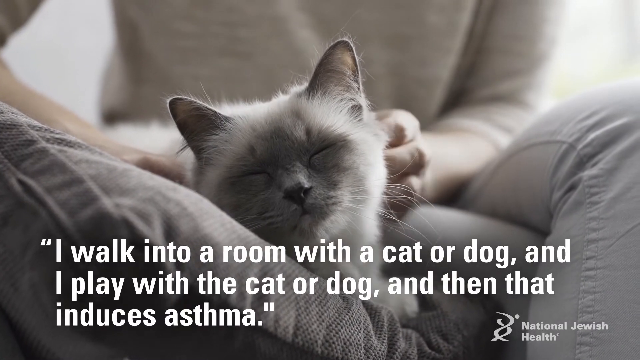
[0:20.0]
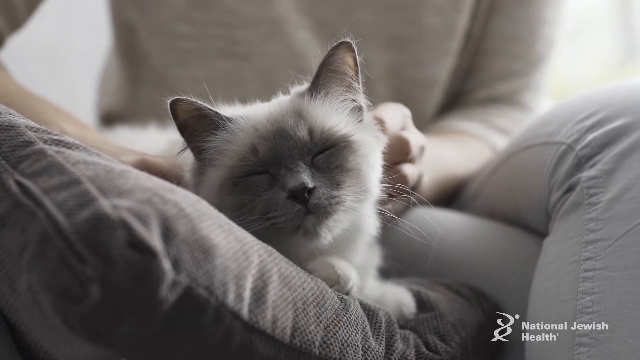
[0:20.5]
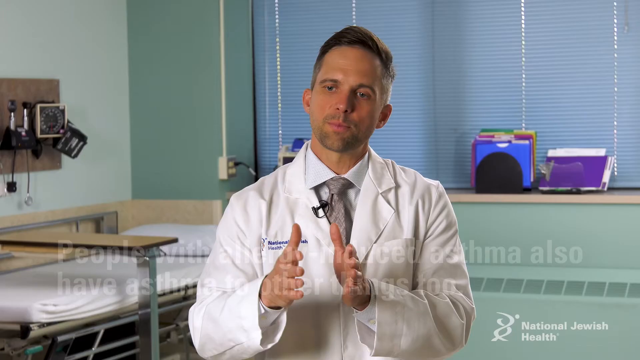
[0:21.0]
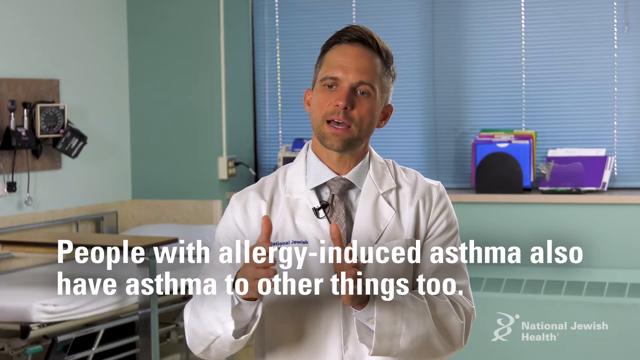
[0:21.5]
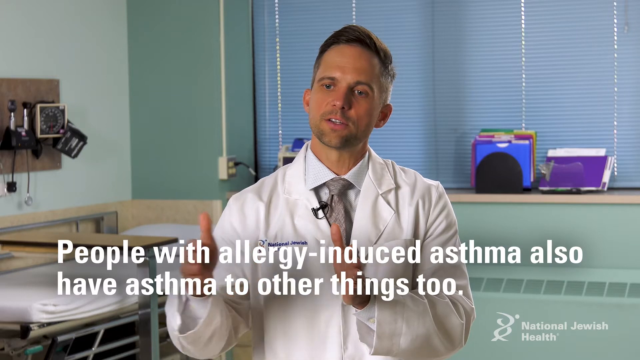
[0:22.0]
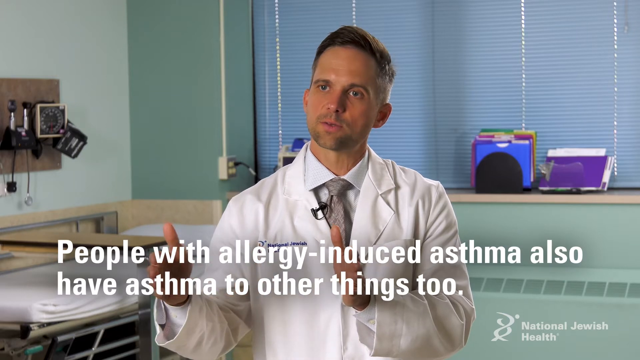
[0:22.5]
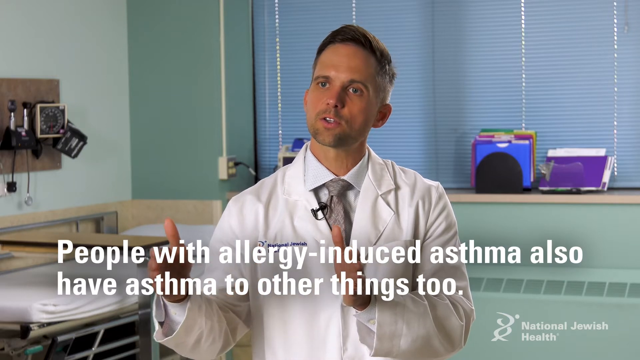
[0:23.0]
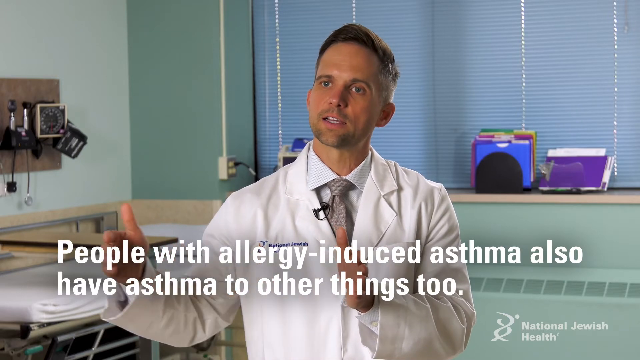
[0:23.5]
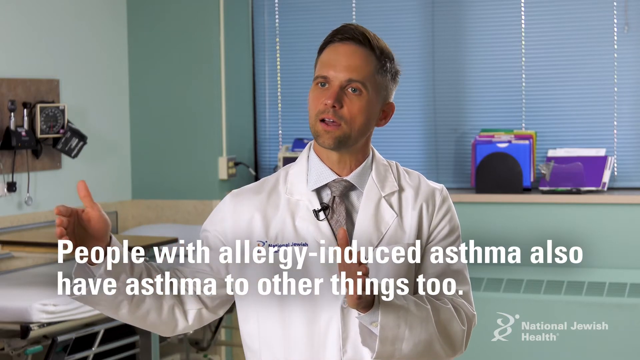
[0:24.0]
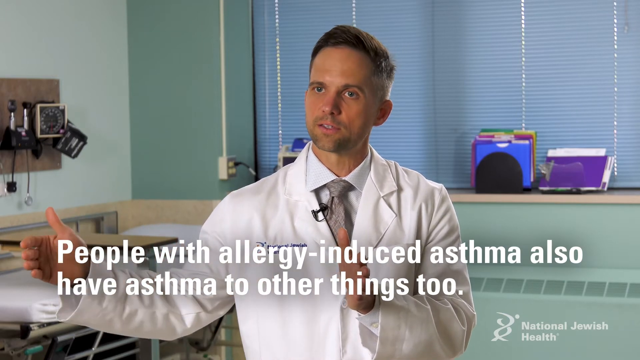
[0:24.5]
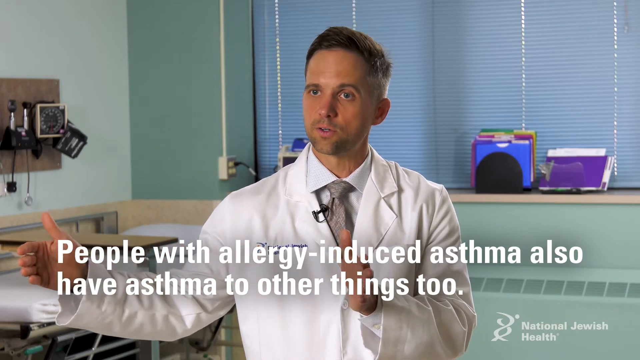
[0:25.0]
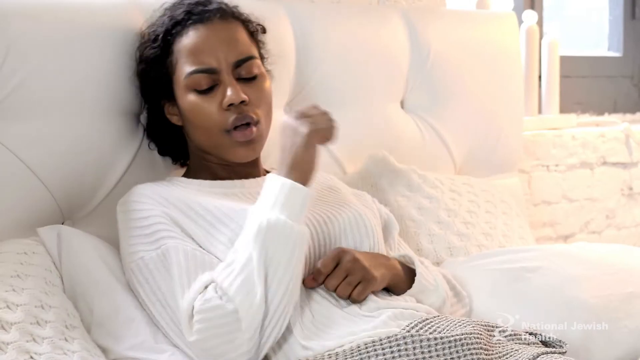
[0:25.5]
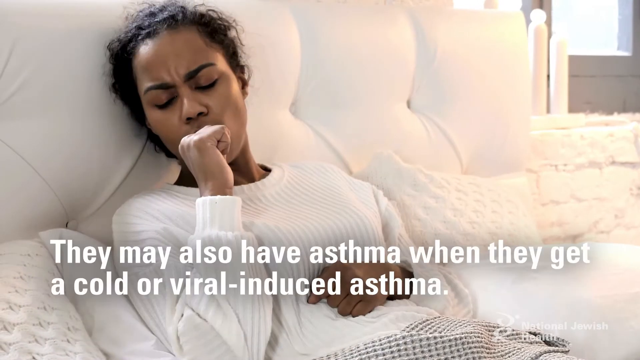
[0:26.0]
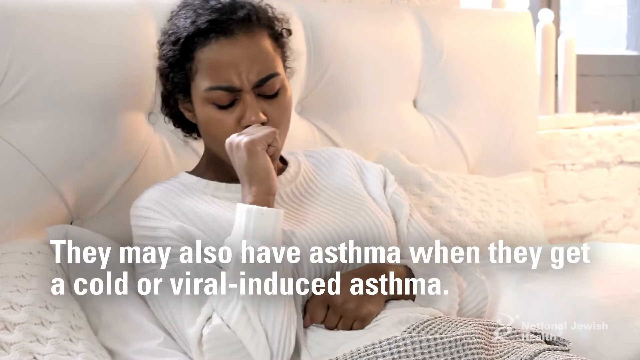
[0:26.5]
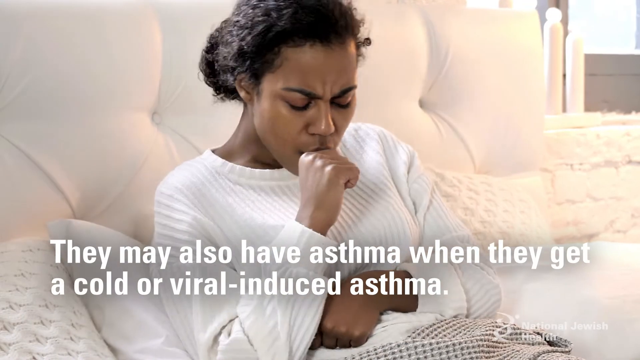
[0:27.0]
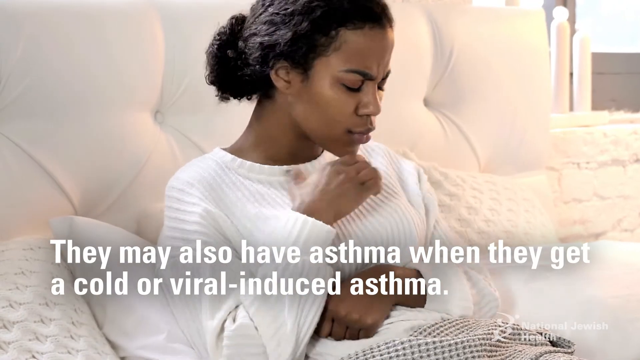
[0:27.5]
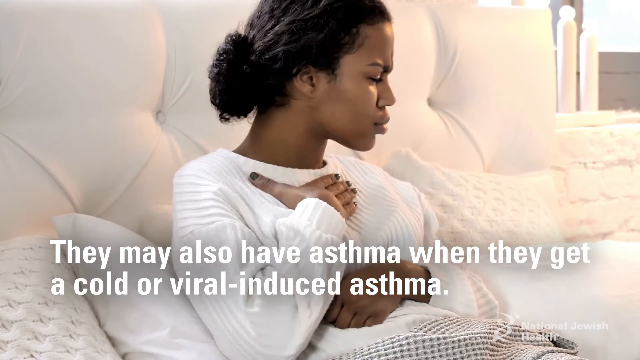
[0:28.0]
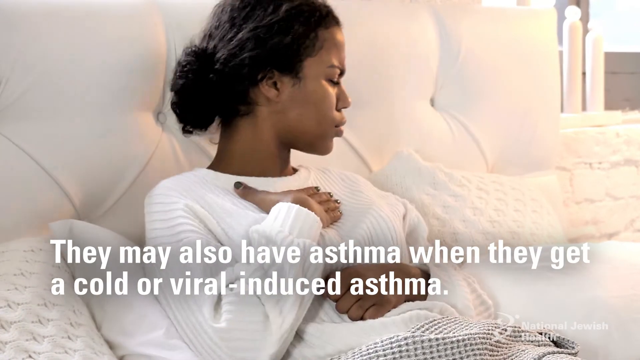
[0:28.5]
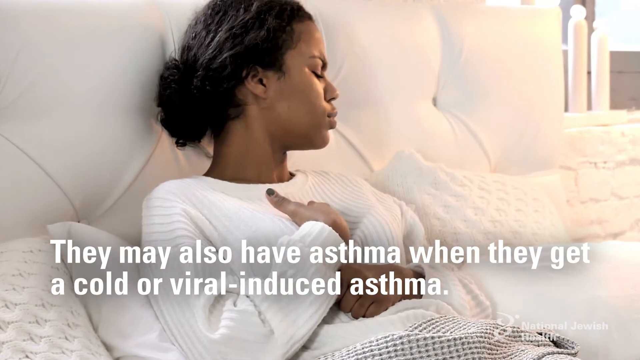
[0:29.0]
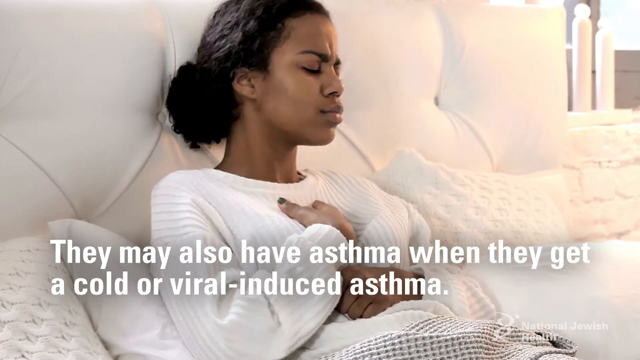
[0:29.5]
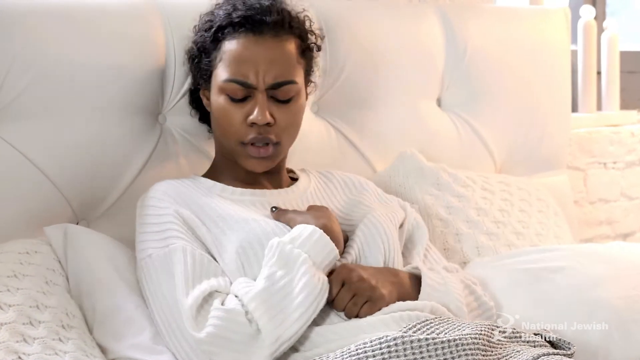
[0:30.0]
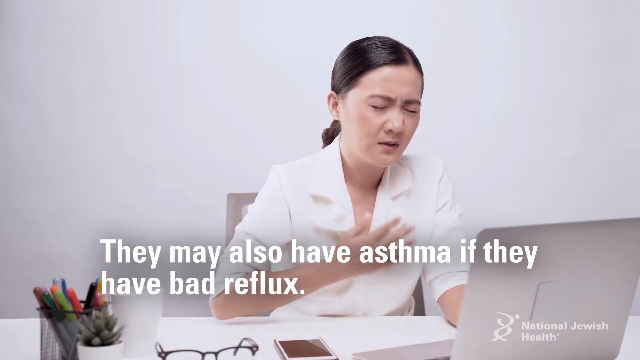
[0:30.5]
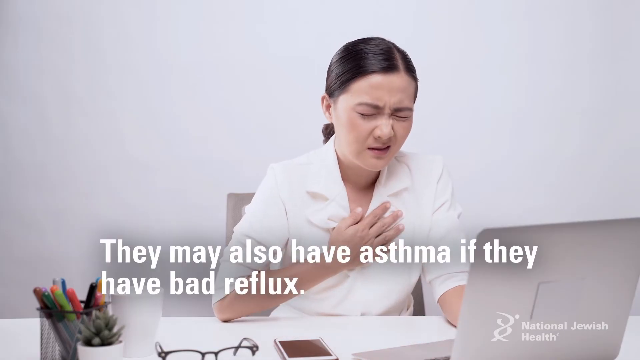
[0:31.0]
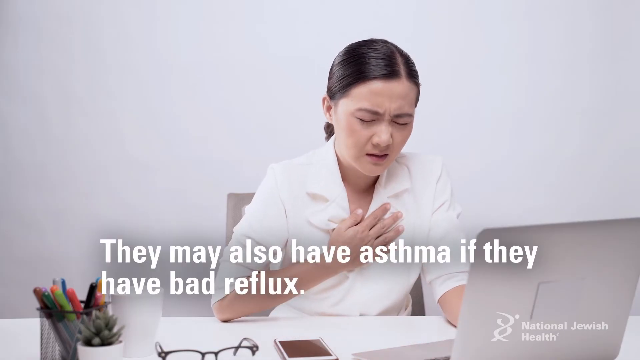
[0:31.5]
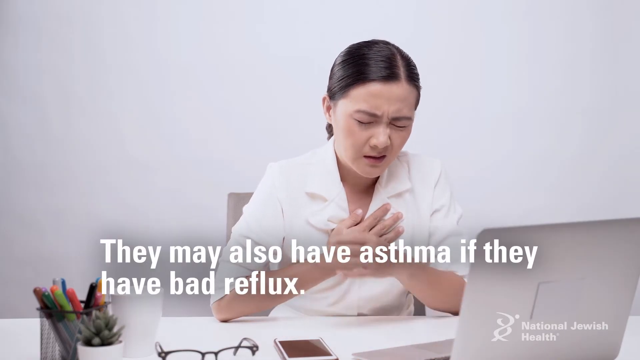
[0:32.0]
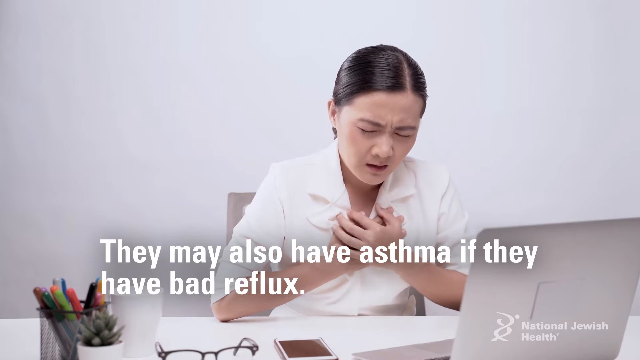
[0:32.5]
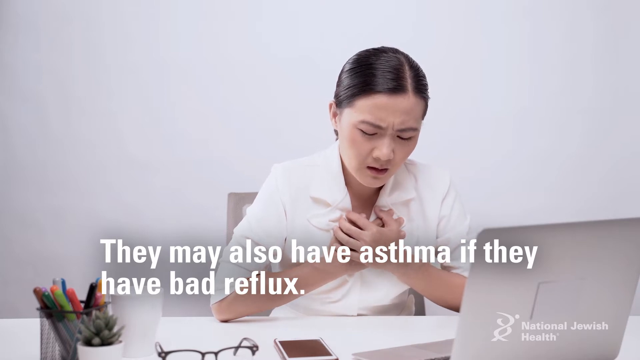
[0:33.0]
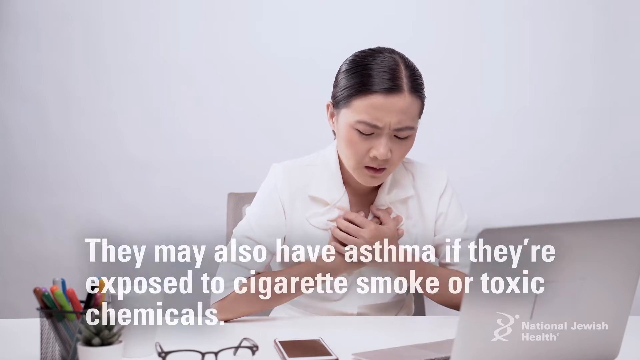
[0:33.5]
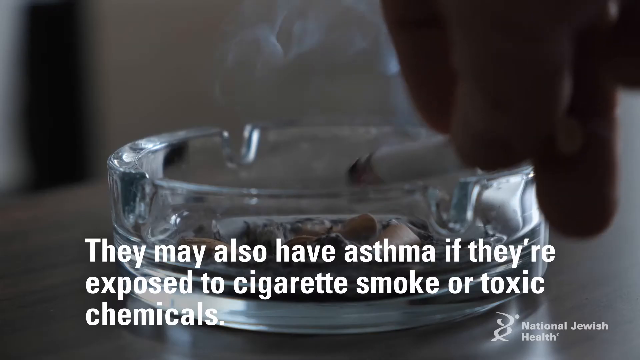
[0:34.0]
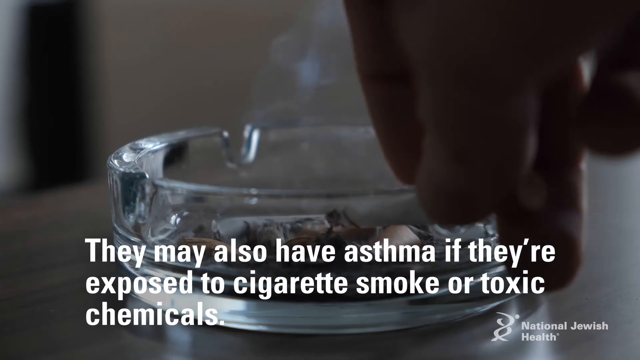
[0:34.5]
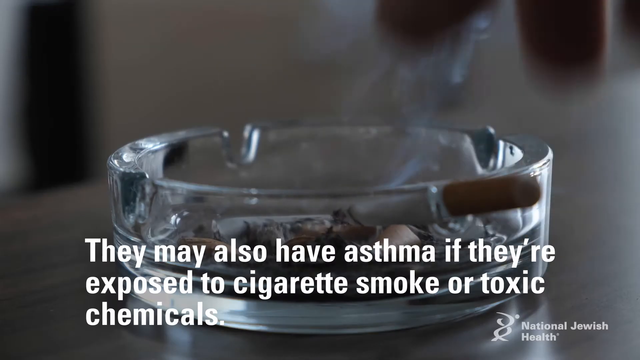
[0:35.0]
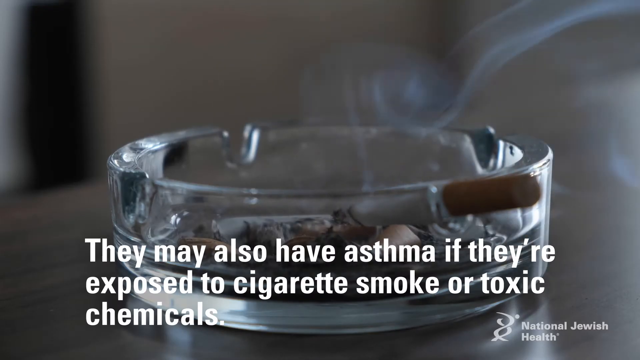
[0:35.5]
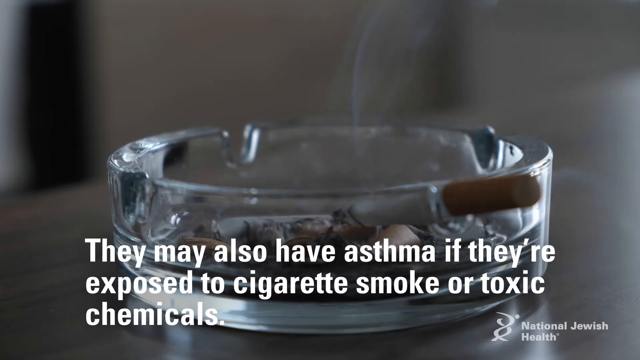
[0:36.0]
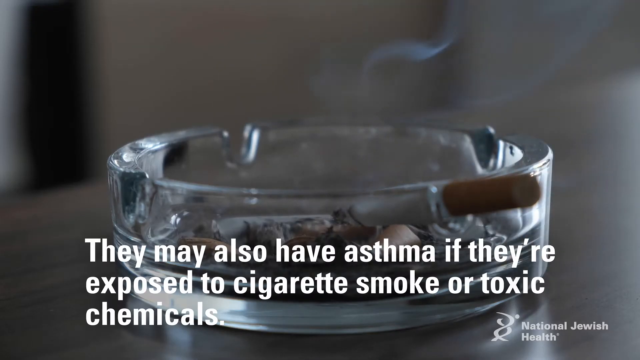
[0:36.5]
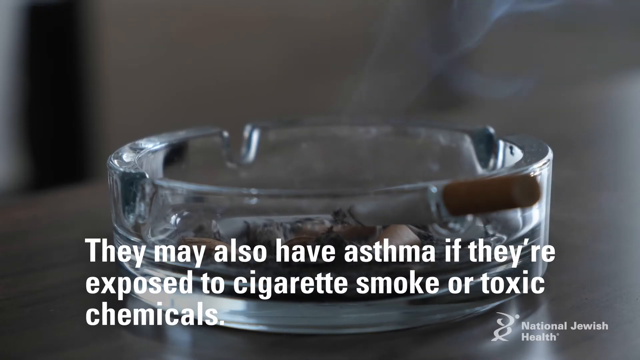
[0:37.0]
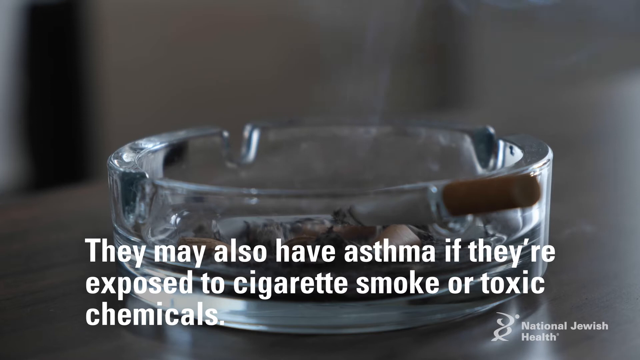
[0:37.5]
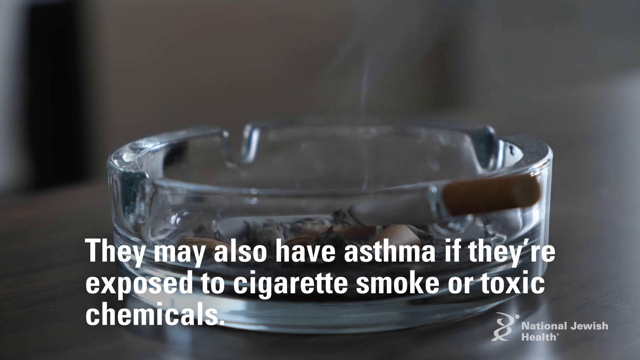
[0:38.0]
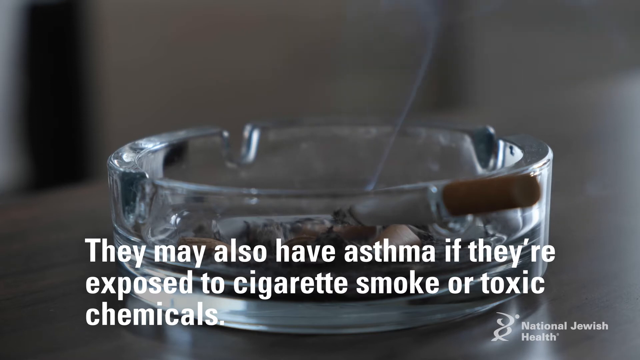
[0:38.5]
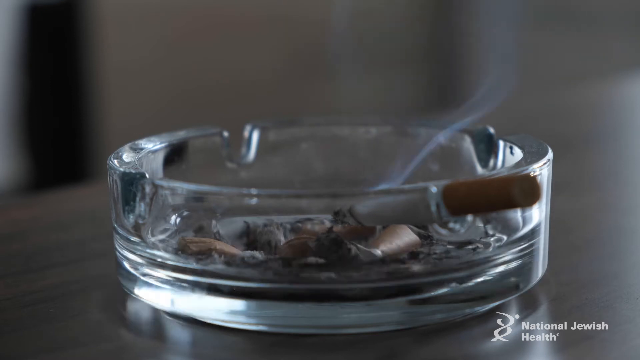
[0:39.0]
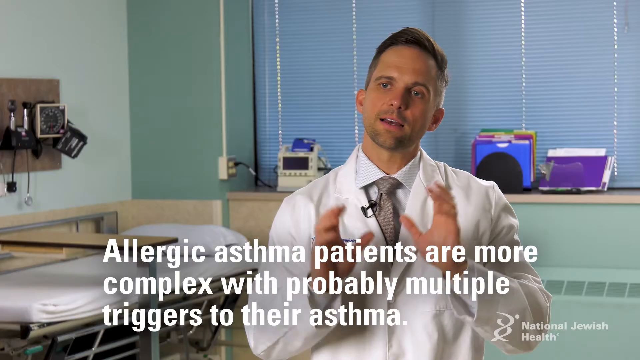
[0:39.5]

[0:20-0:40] A Siamese cat lies in a woman's lap as she pets it. She sits on a gray couch and wears blue jeans, and the cat is loving it.